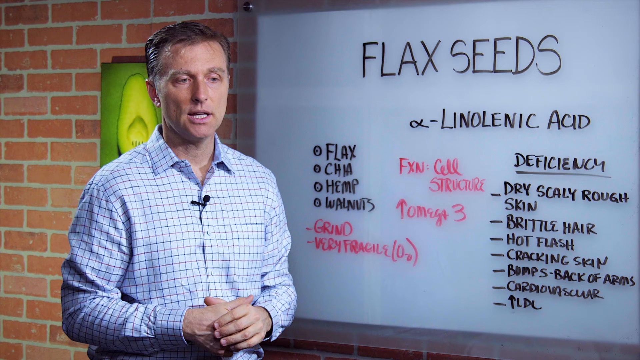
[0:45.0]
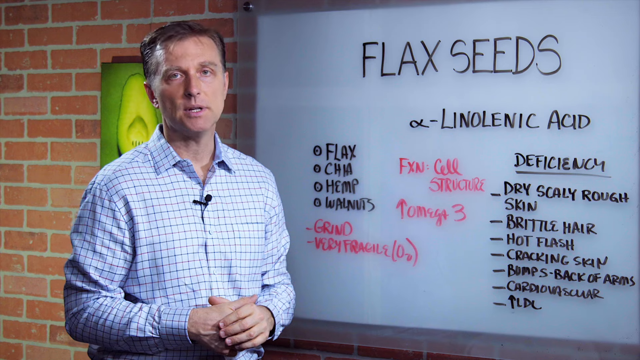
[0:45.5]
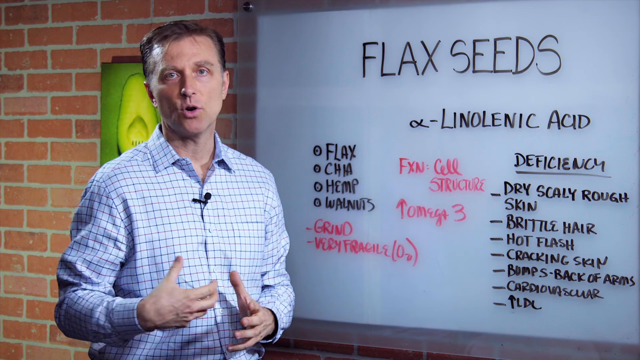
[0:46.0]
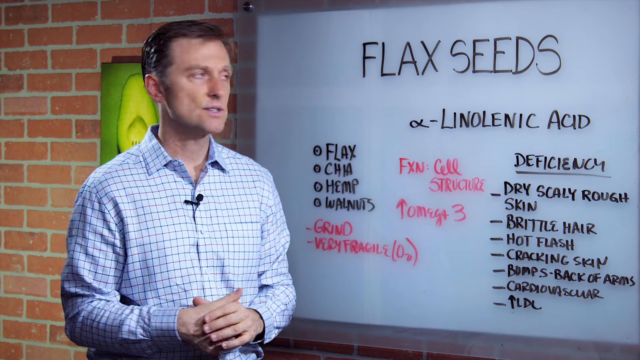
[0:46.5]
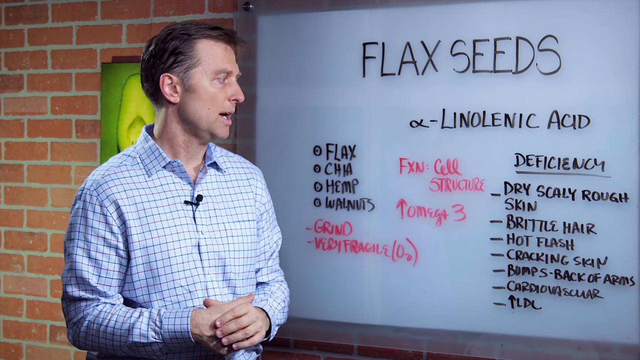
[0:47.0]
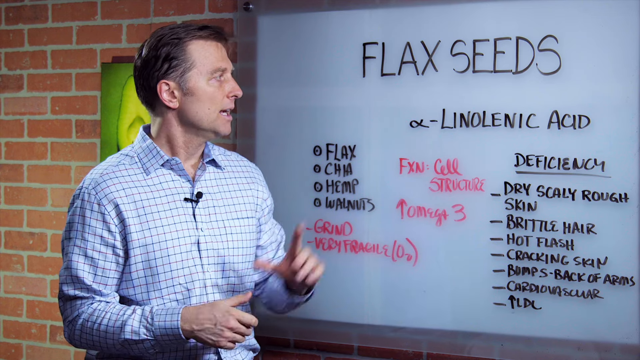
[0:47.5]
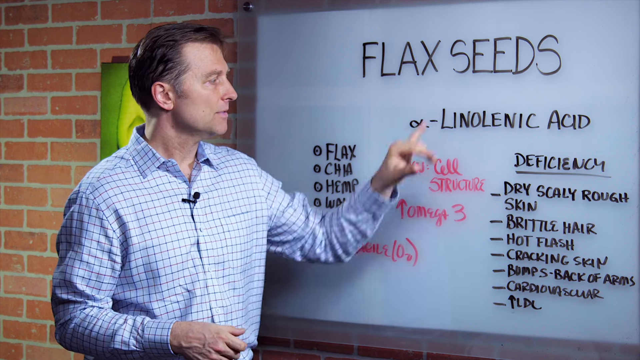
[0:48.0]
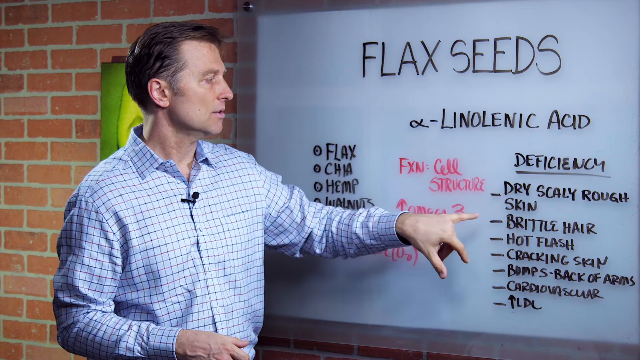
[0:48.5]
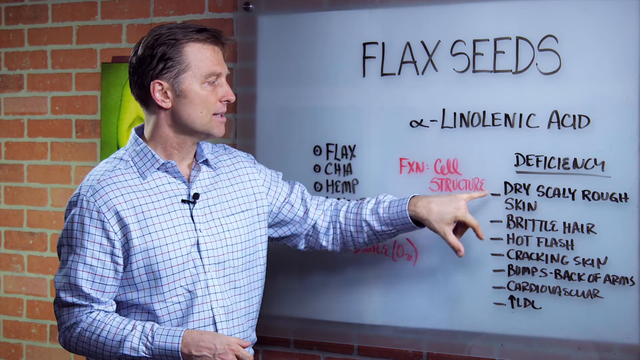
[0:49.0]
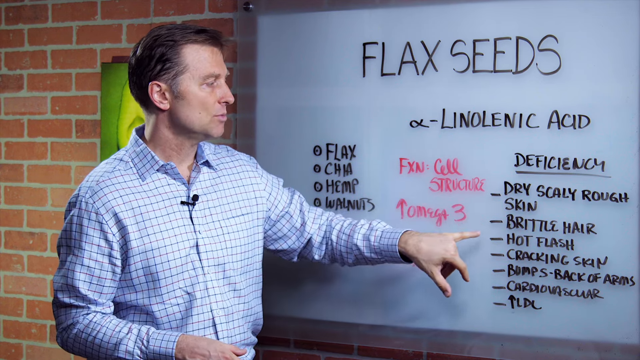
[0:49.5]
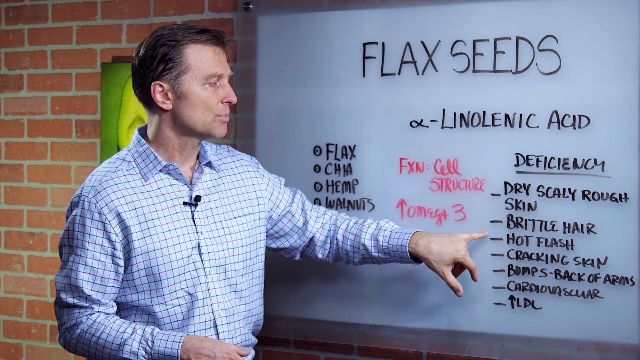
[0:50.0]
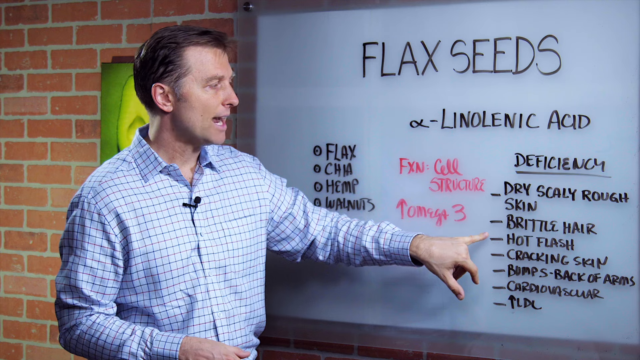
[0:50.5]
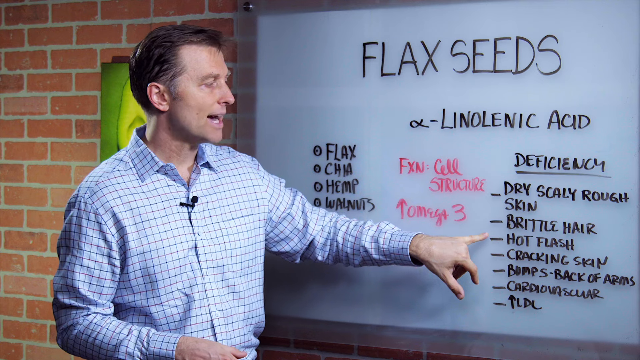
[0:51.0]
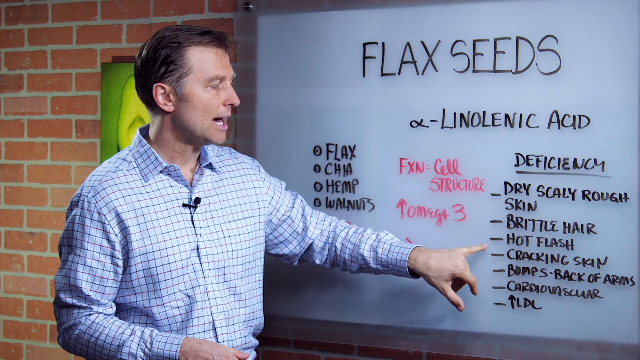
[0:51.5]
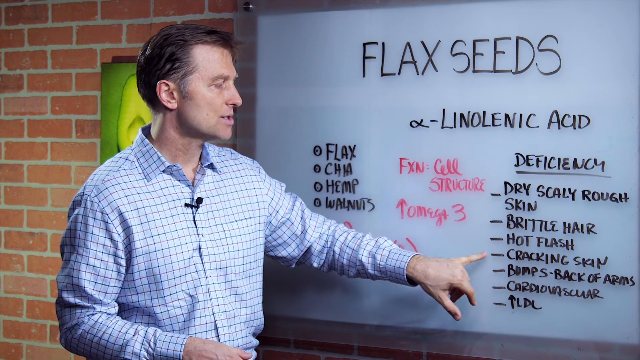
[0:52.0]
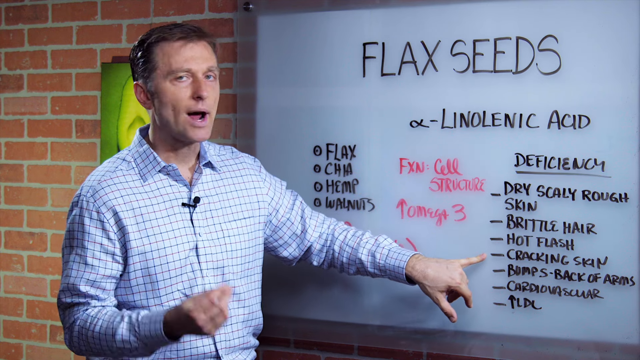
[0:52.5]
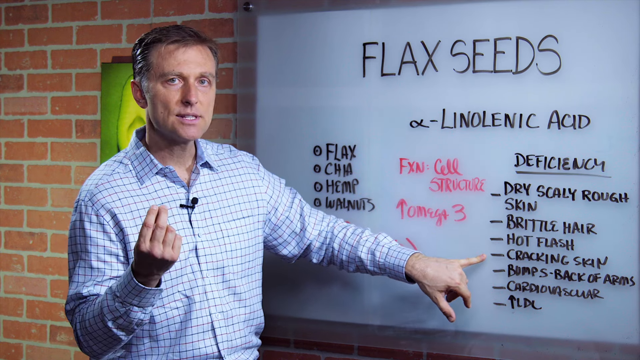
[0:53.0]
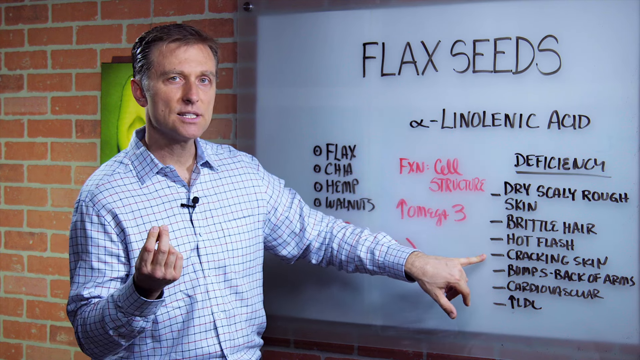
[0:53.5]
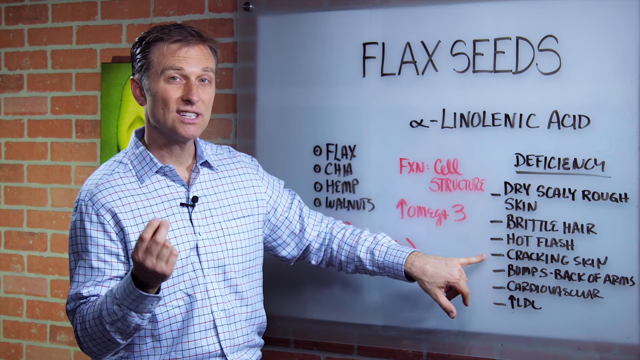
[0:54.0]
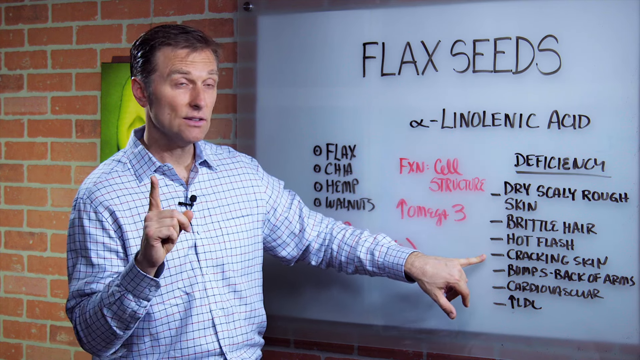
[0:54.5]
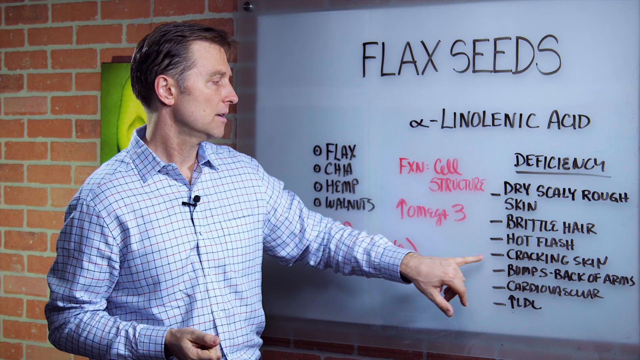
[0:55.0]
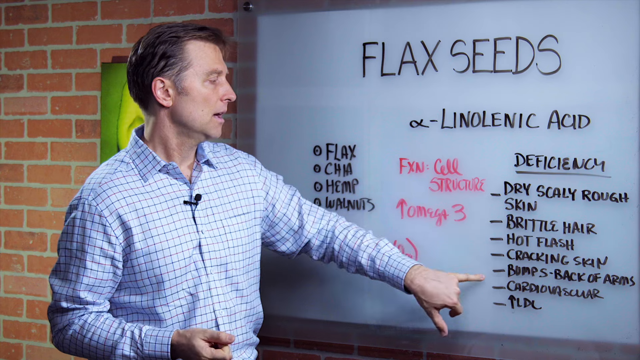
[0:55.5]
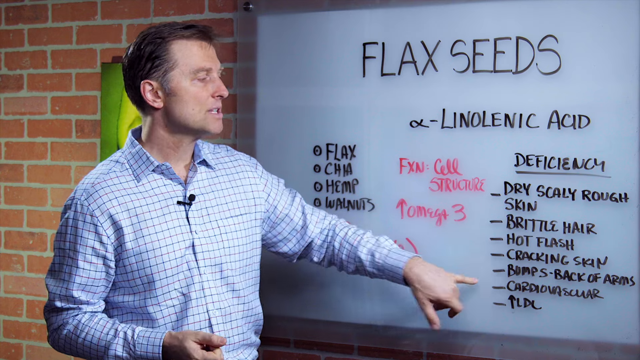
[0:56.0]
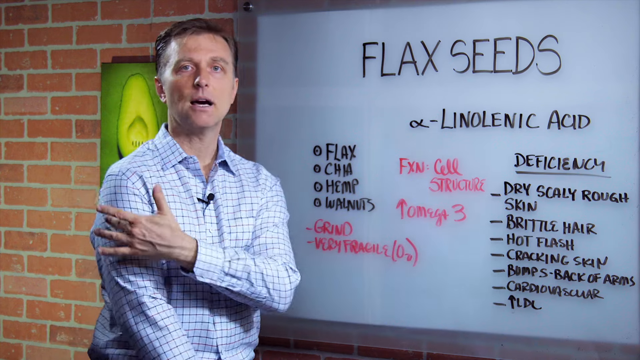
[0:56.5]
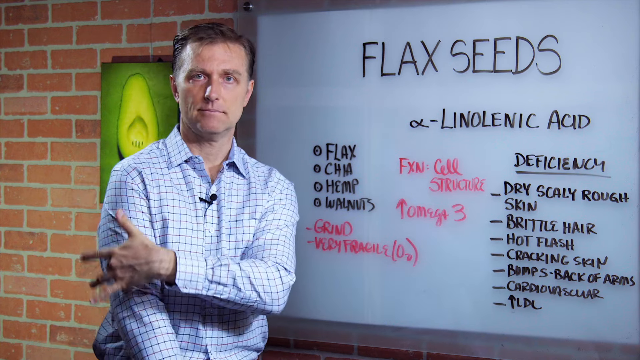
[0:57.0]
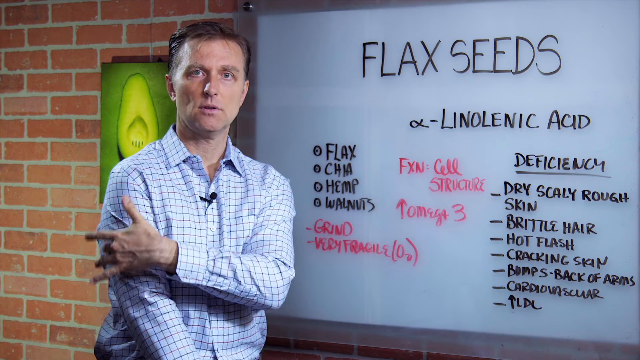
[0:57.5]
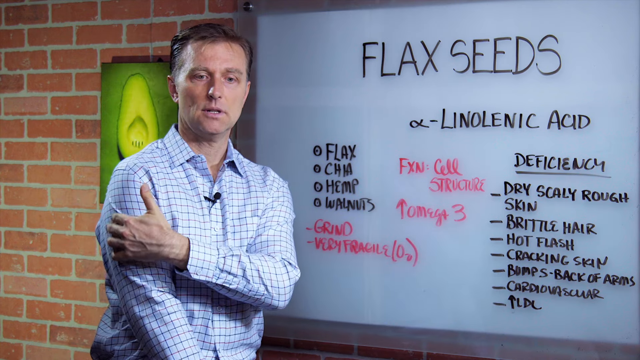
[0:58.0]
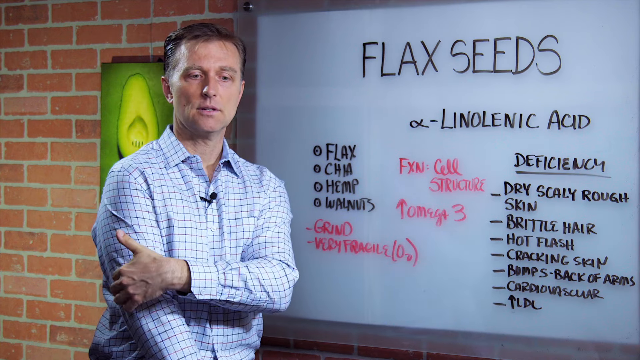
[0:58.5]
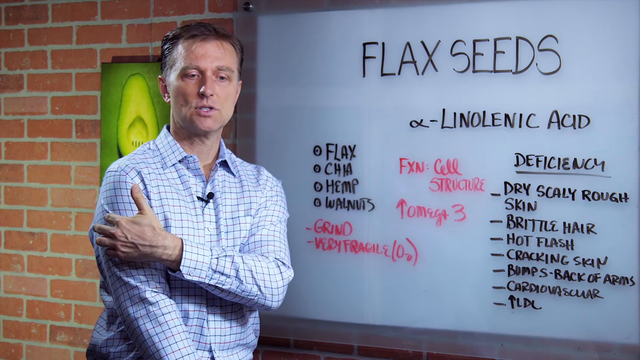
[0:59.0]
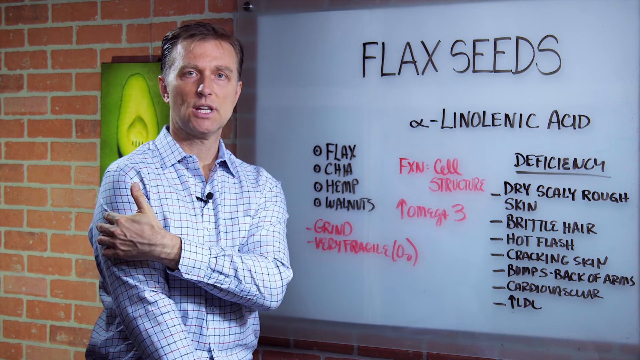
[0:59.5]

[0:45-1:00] A man presents information about flax seeds; the whiteboard next to him says "flax seeds" in large lettering, with small black lettering underneath and pink lettering. He uses his pinky to point to different words written in black. He rubs his upper right arm with his left hand. He wears a blue and white shirt with a microphone attached and speaks very seriously, using his hands, pointing in the air and cupping his hands in between. He is a white man with black hair. Behind him is a red brick wall with a picture of a seed, of which a little is visible; more of it shows when he moves toward the whiteboard. The seed is cut in half and bordered by a green background, and the seed itself is a lime-green-like color.